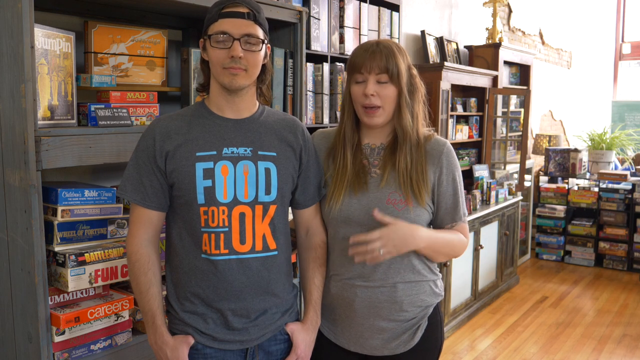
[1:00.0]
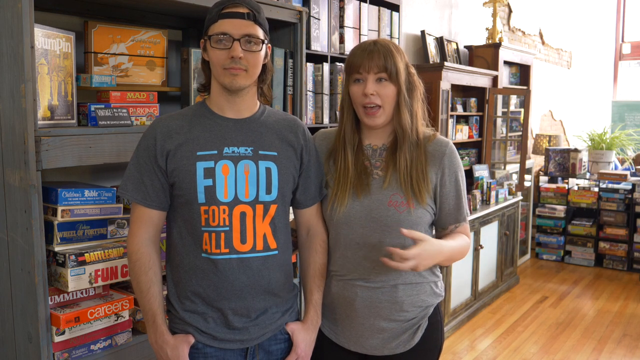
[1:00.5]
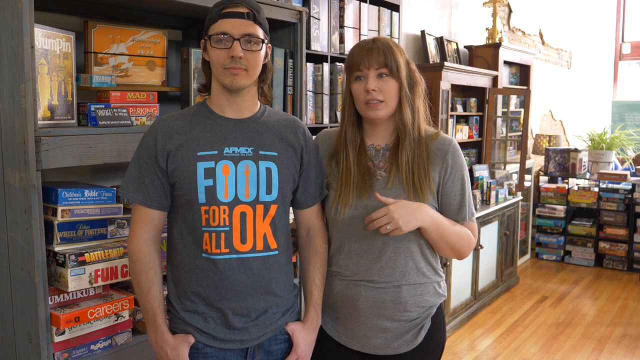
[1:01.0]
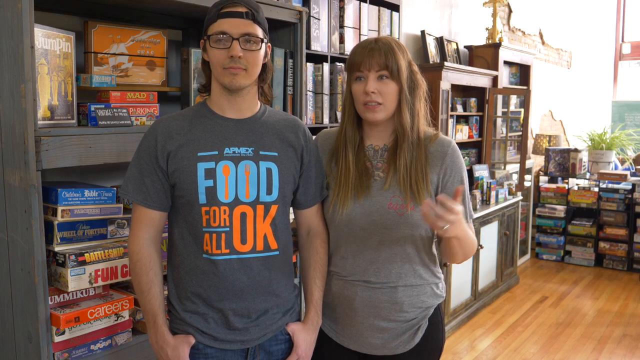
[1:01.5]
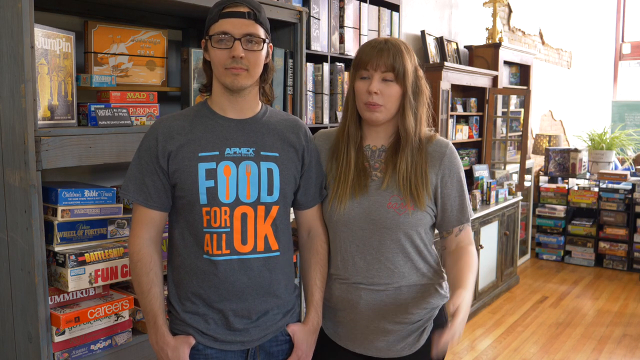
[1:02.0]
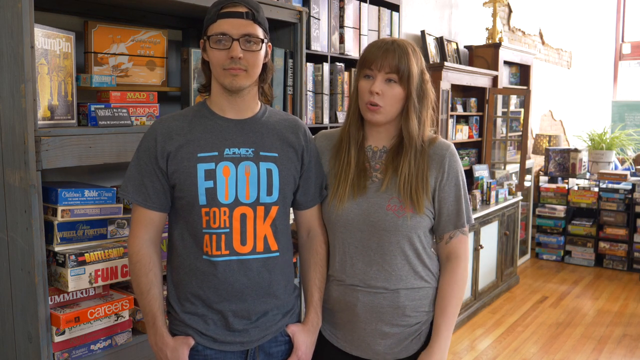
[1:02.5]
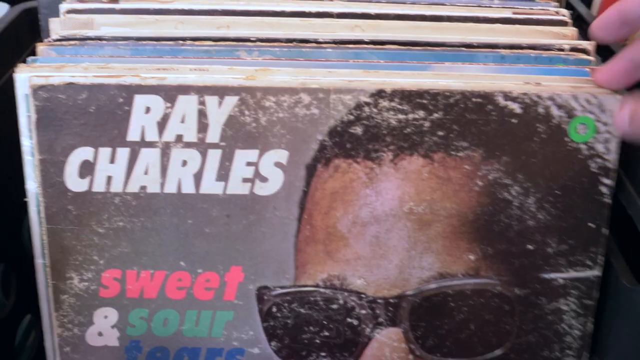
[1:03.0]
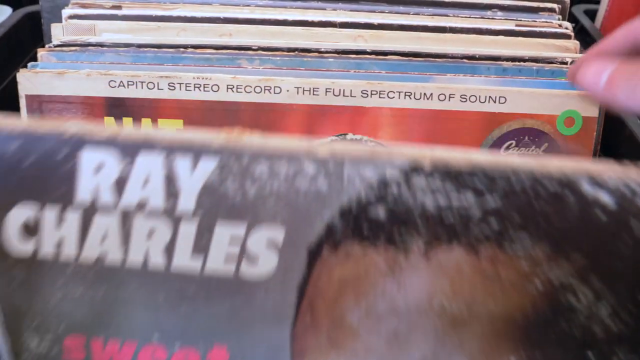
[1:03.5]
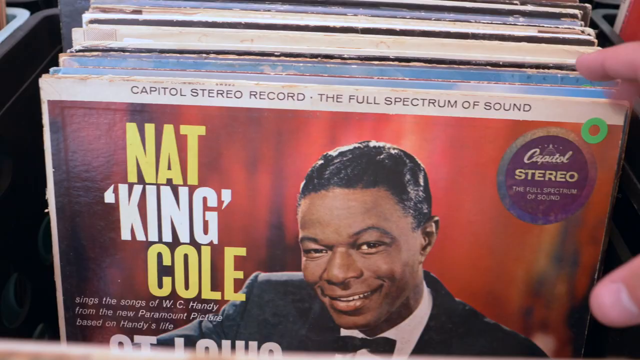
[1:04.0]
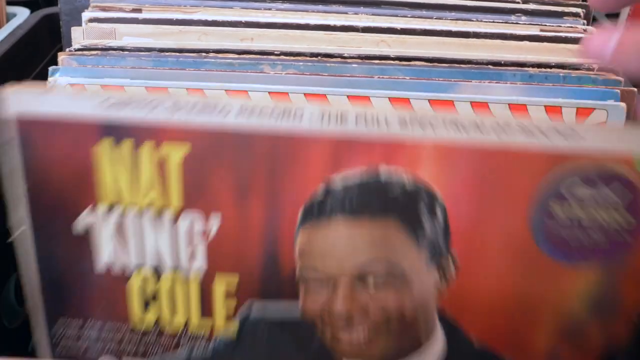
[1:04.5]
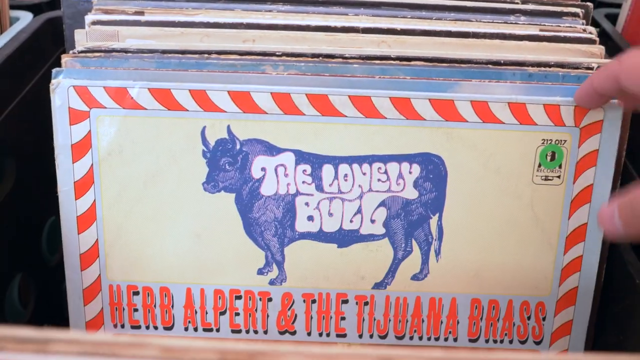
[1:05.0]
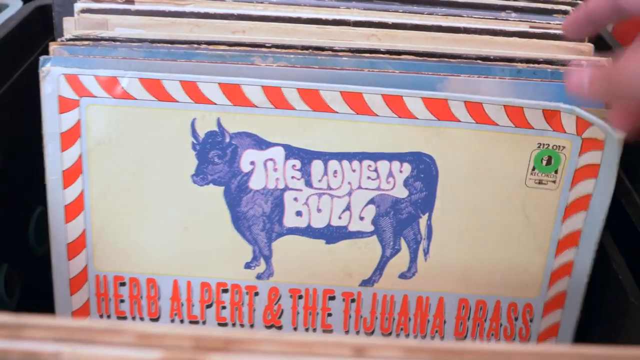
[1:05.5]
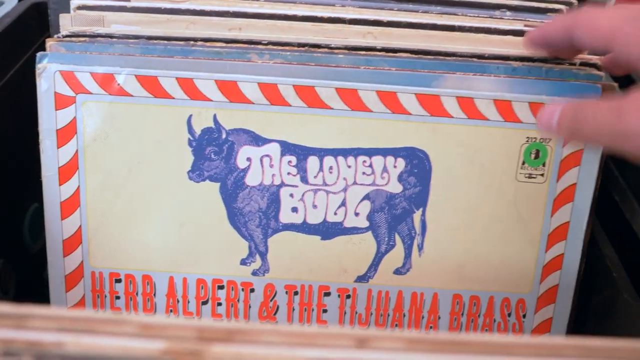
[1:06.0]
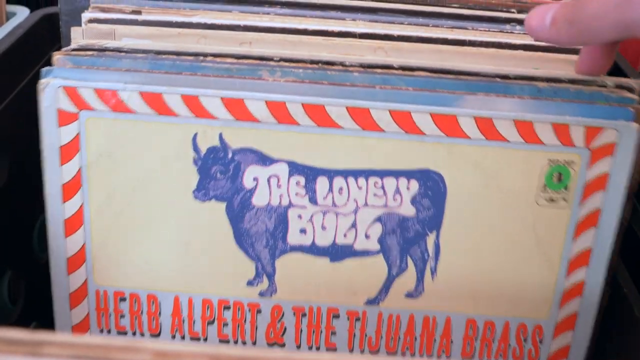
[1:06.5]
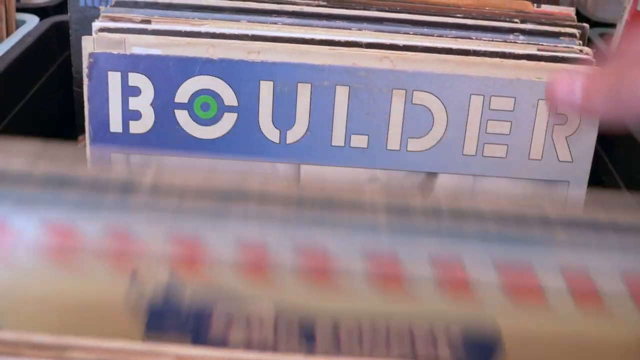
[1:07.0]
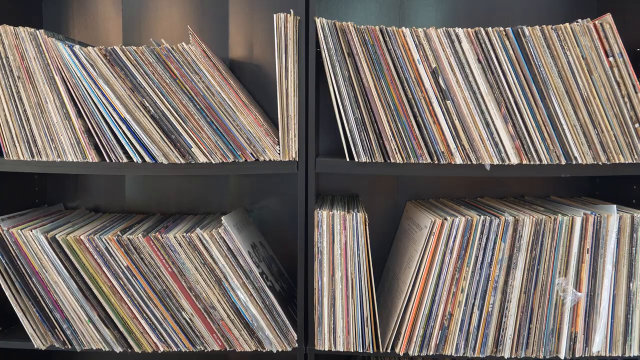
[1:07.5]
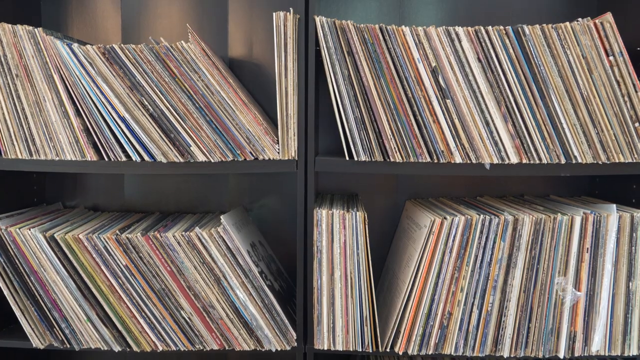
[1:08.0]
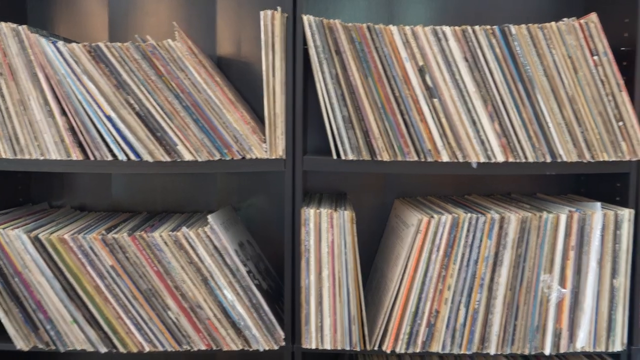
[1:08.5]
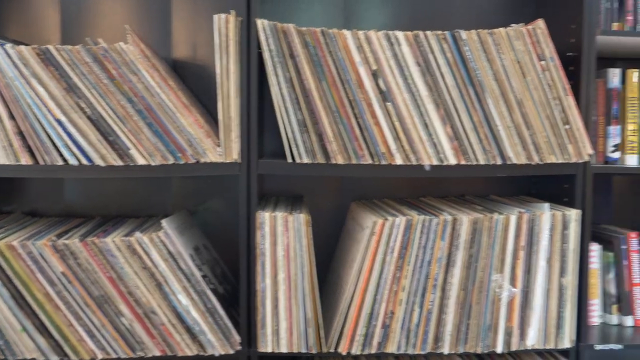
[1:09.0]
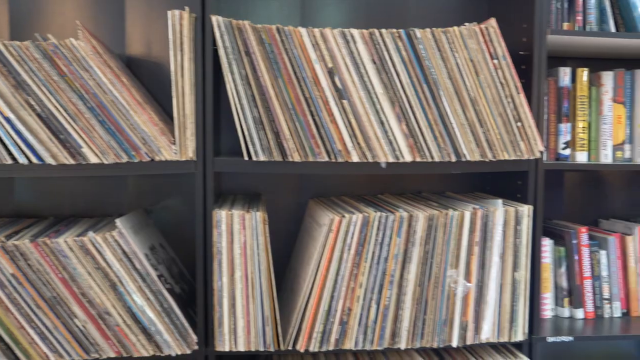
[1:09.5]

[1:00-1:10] The two people who work at the gaming house are speaking, with the woman continuing to gesture with her hands. The next scene shows a collection of old-school vinyl albums; the first is Ray Charles, its case beat up with scratch marks and imperfections. A hand on the right side of the screen begins to flip through, revealing Nat King Cole and other albums. Next, a large collection of album sleeves is stacked neatly on a wooden shelf, arranged so that only the sides of the sleeves are visible, not the fronts. To the right of them is a collection of books.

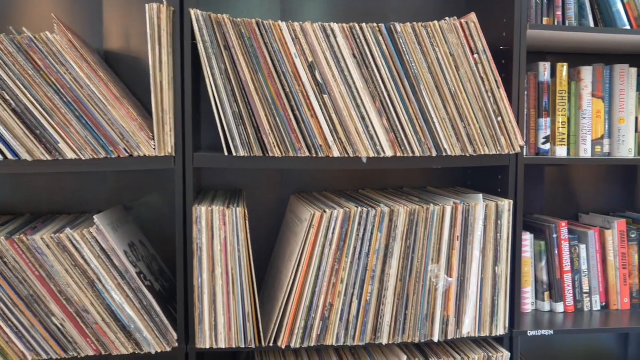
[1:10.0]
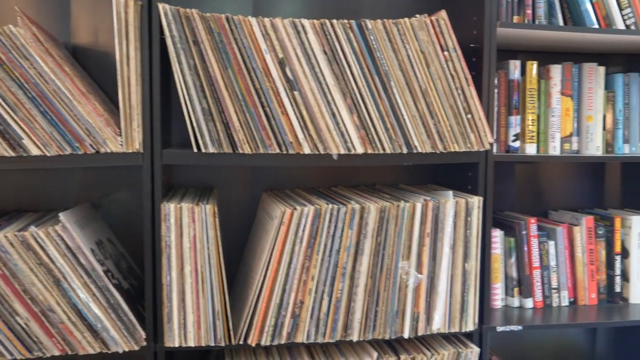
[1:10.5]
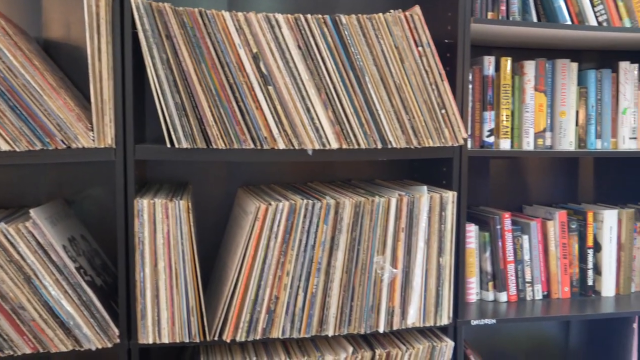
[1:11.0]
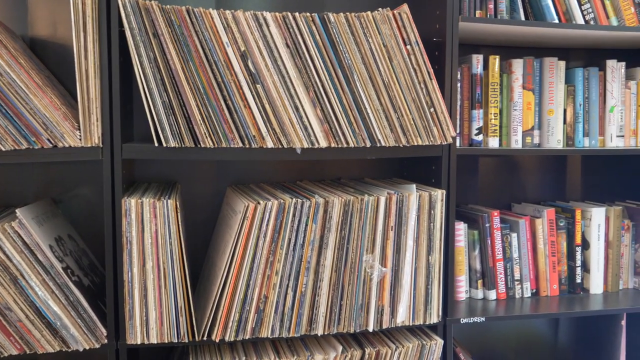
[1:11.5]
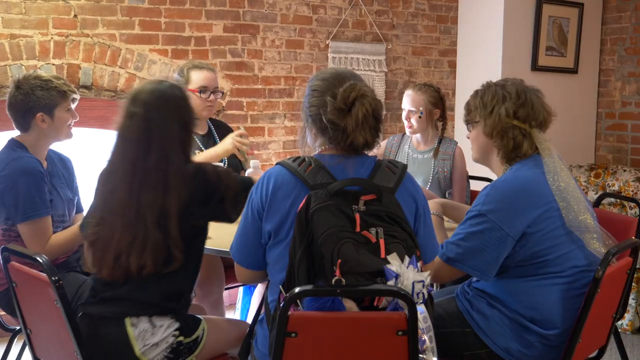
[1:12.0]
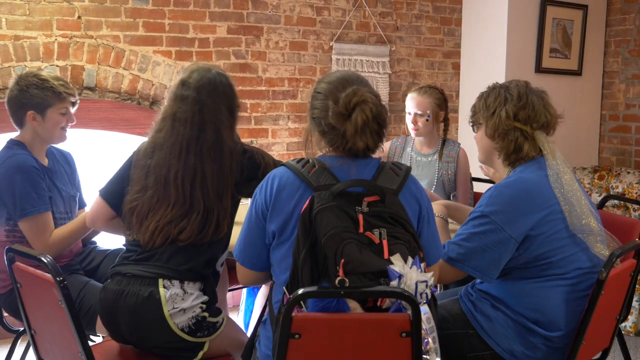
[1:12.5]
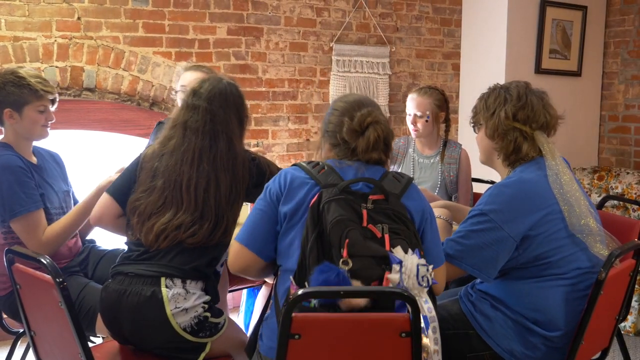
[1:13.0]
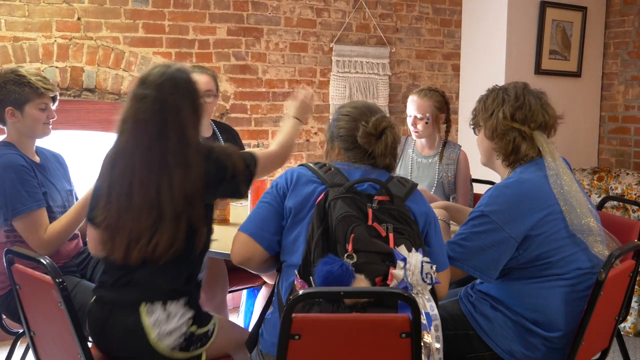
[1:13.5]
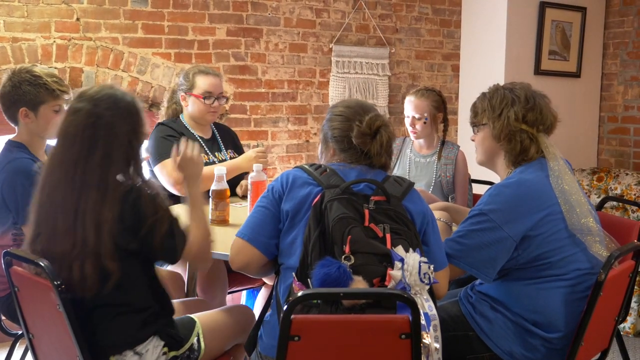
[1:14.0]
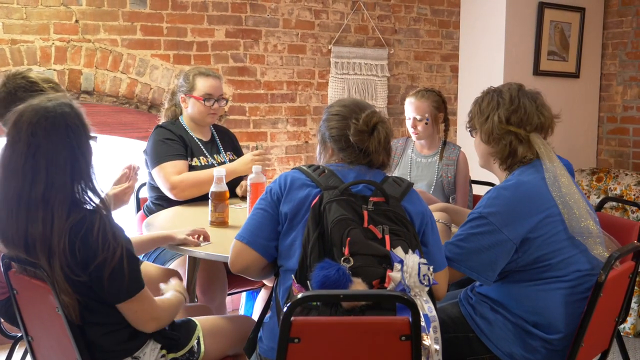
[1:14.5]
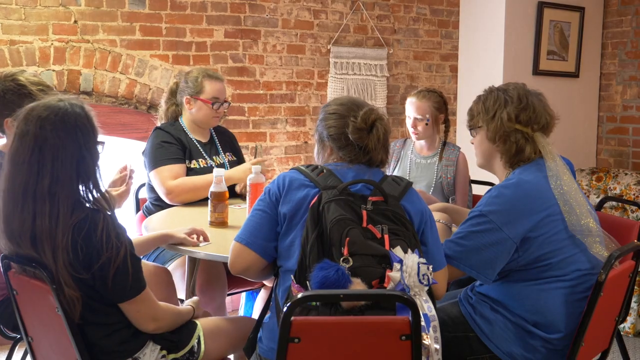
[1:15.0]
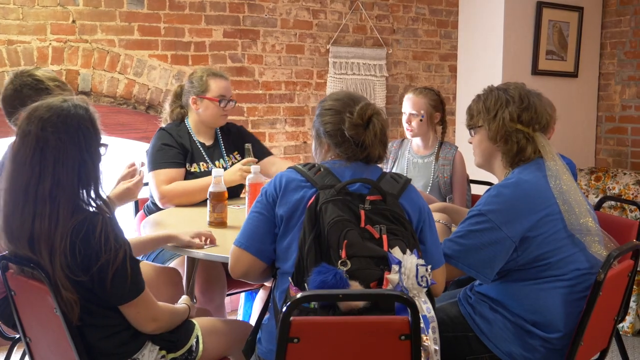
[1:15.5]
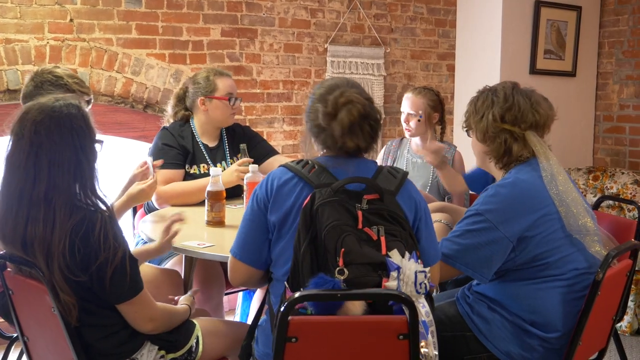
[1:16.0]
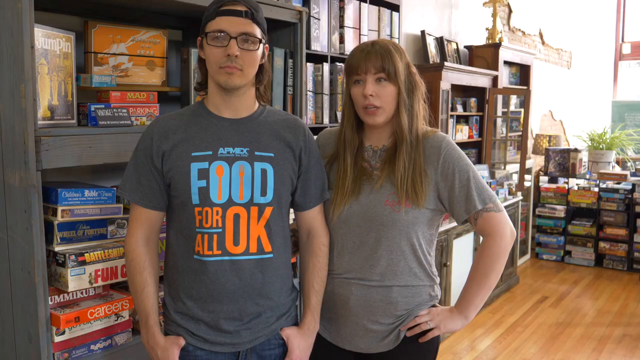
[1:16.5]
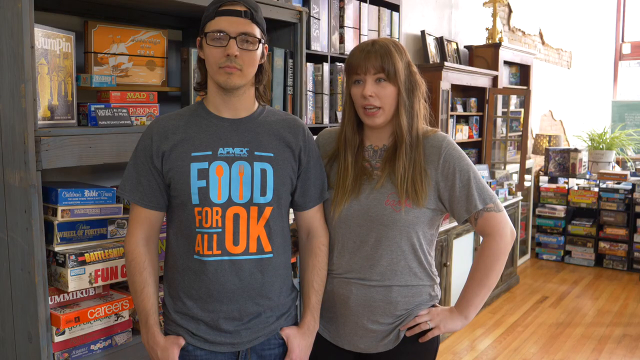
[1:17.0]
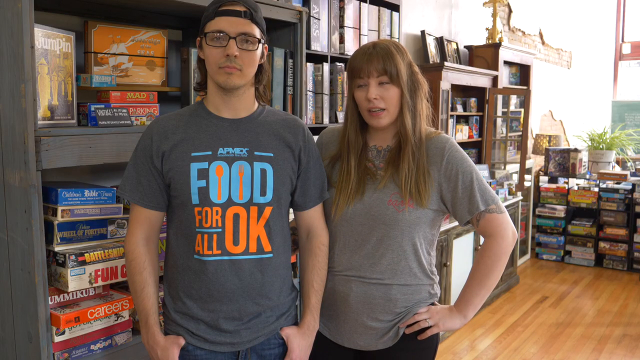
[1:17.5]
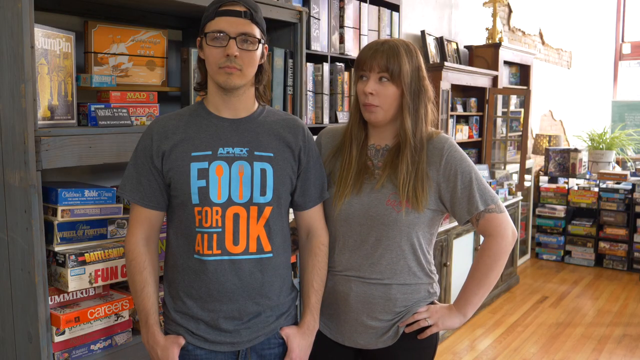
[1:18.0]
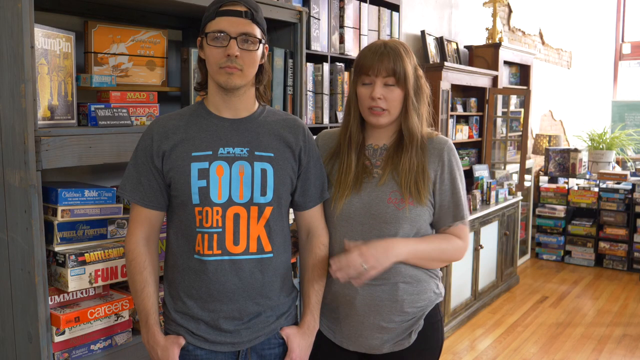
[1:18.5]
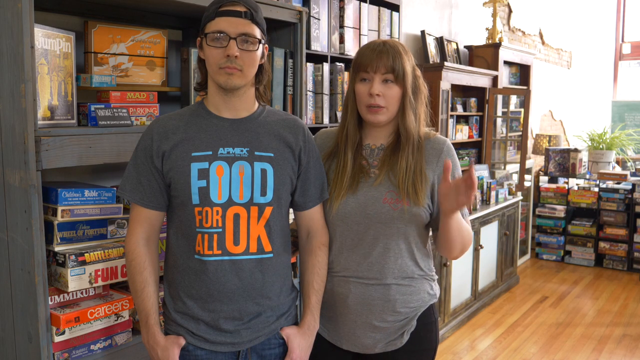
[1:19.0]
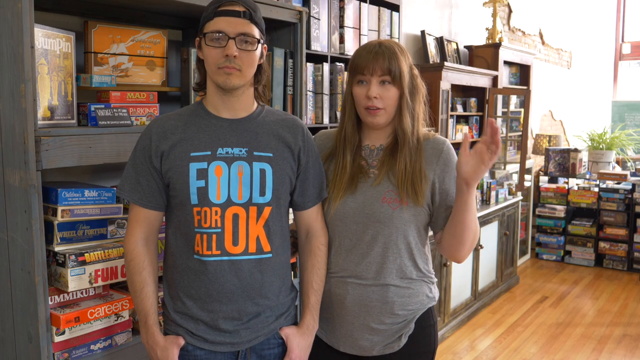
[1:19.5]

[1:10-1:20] A large collection of old-school vinyl album sleeves is turned sideways so their fronts cannot be seen, on display on a light grayish-brown wooden shelf. The next scene shows a white table, which appears to be round, in a room where several people, apparently teenagers, sit in red and black chairs playing a game. Several of the teens wear blue t-shirts. The walls on the left and right are brick, and there are juice bottles on the table.